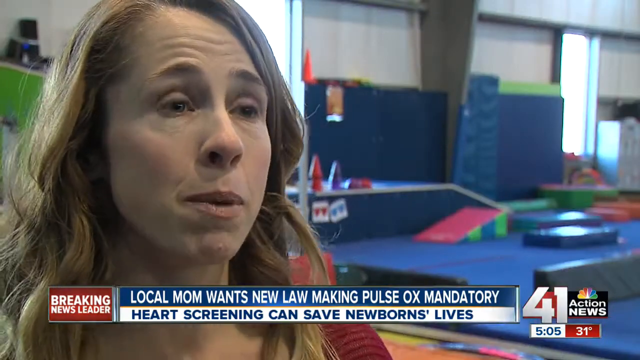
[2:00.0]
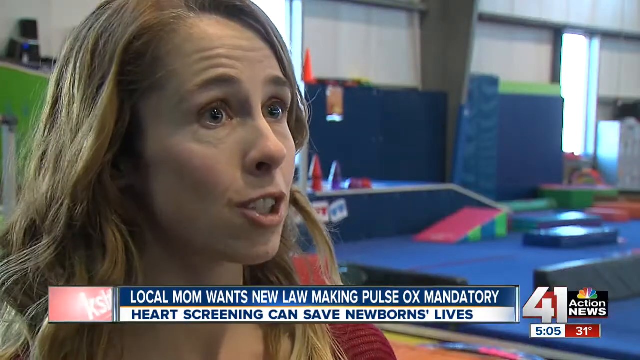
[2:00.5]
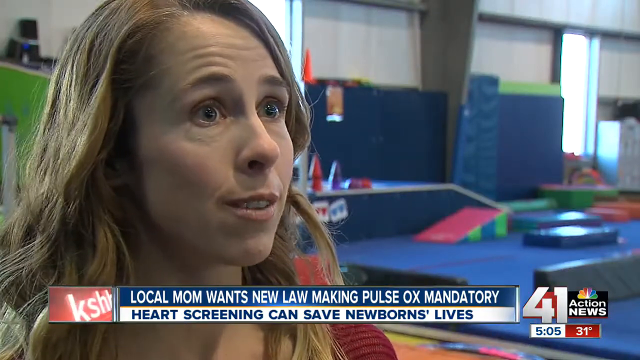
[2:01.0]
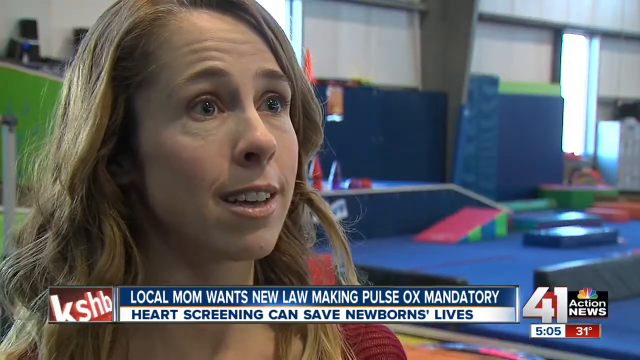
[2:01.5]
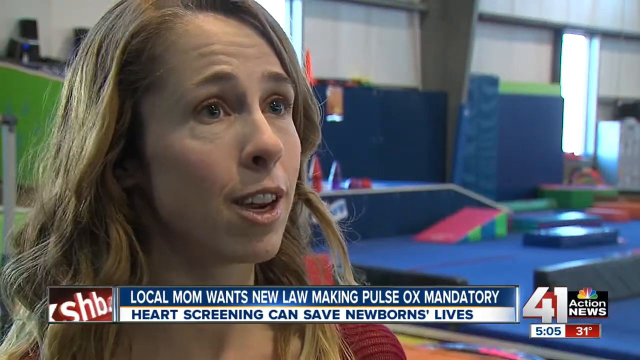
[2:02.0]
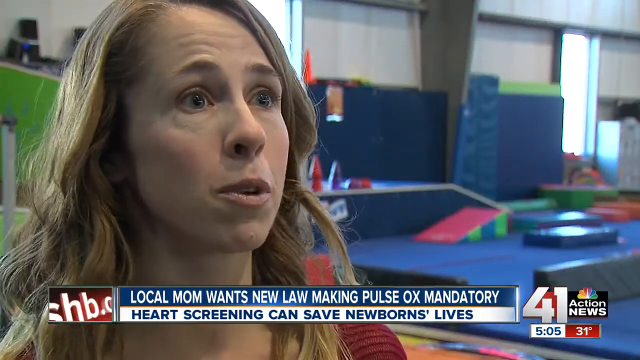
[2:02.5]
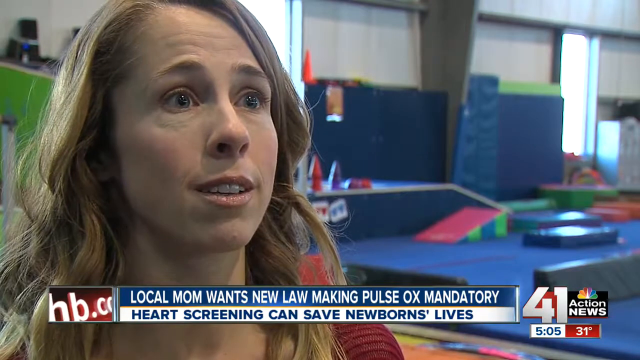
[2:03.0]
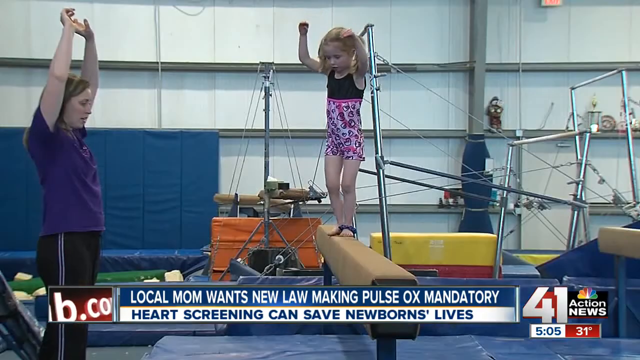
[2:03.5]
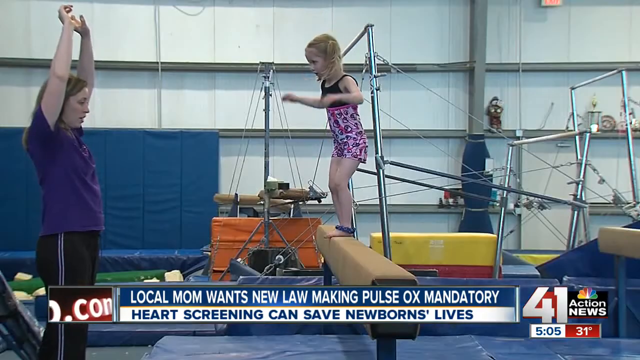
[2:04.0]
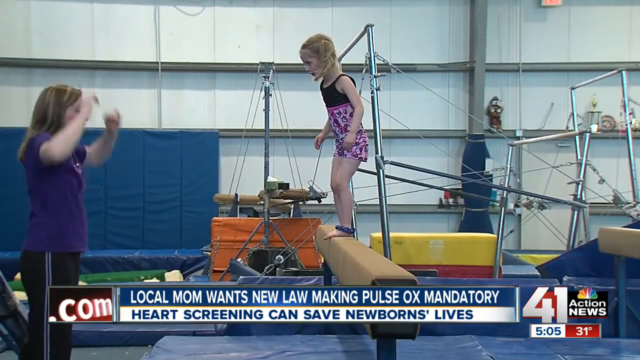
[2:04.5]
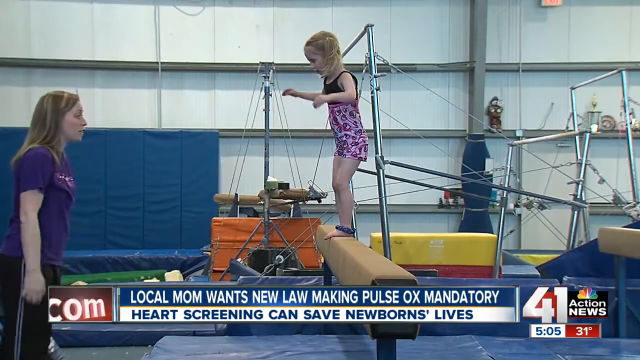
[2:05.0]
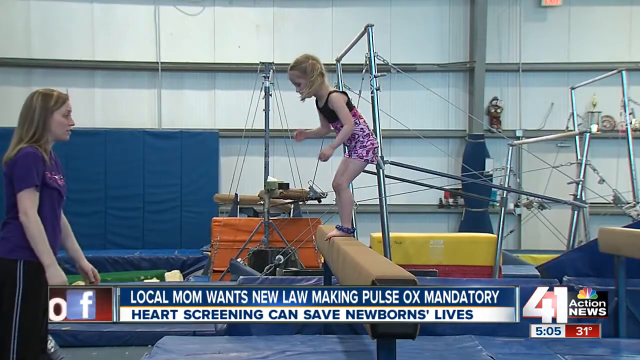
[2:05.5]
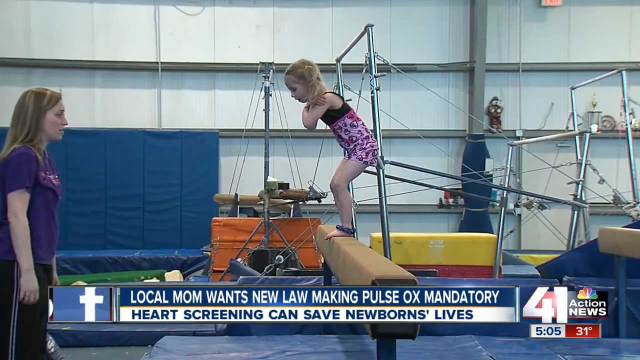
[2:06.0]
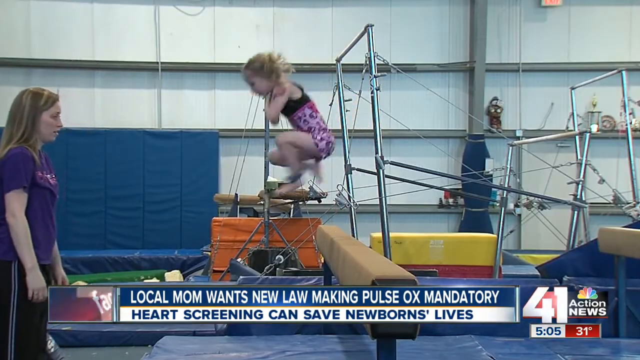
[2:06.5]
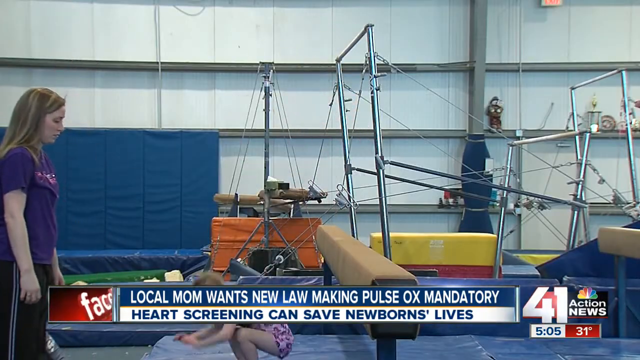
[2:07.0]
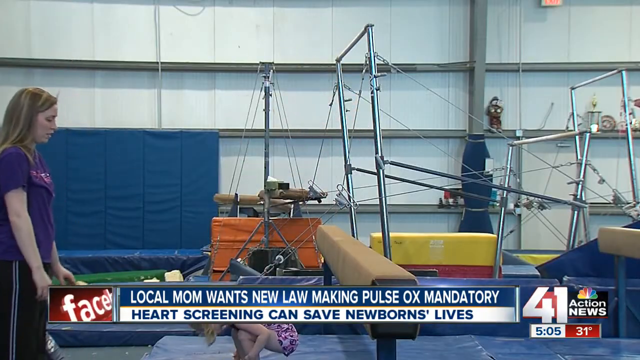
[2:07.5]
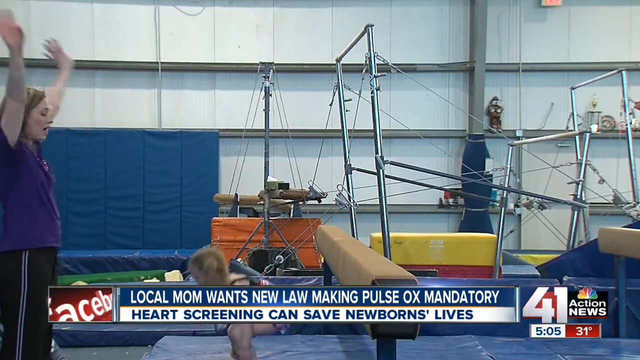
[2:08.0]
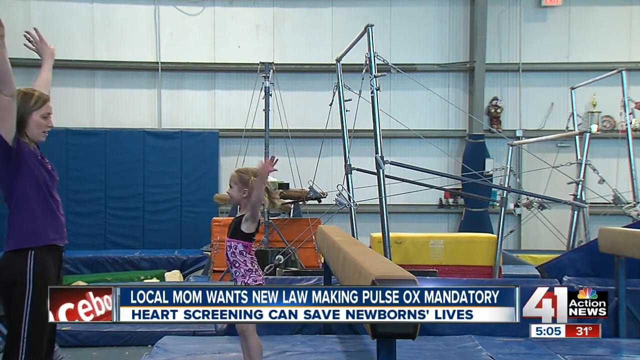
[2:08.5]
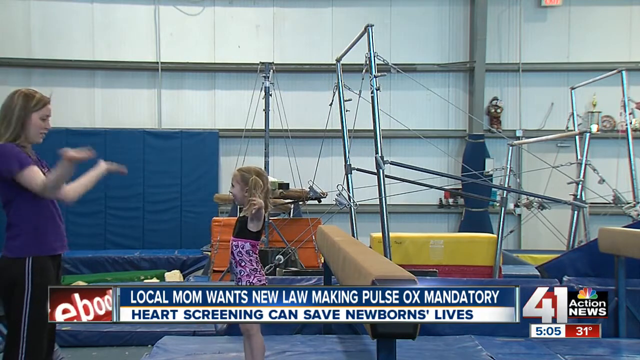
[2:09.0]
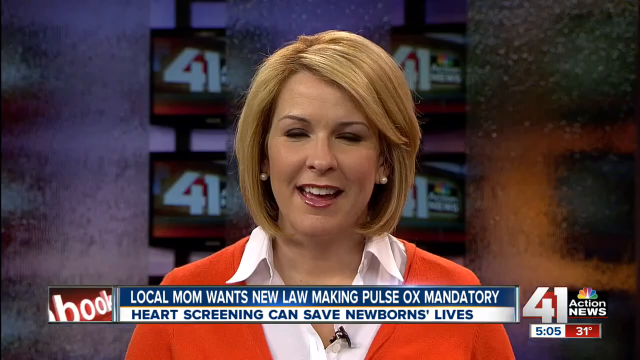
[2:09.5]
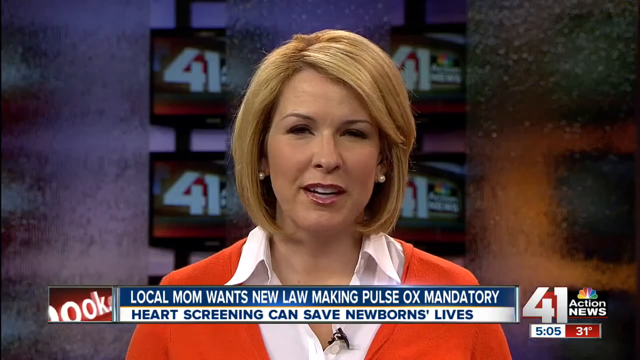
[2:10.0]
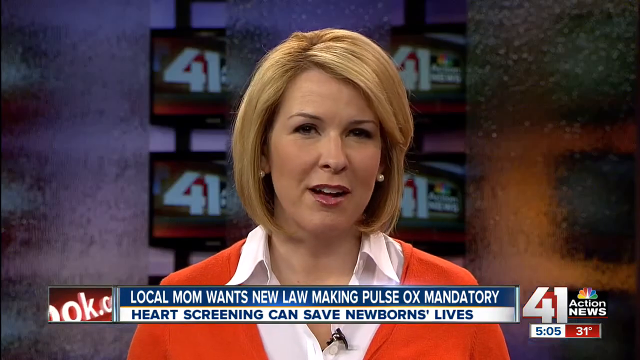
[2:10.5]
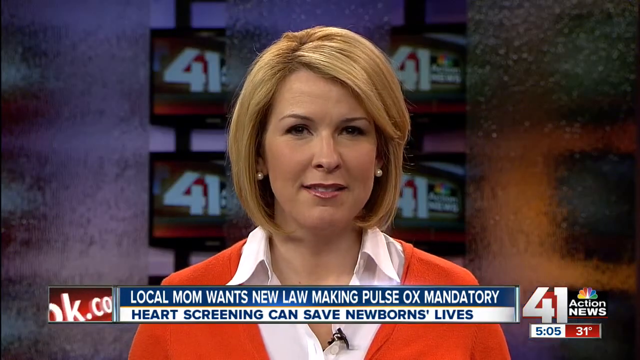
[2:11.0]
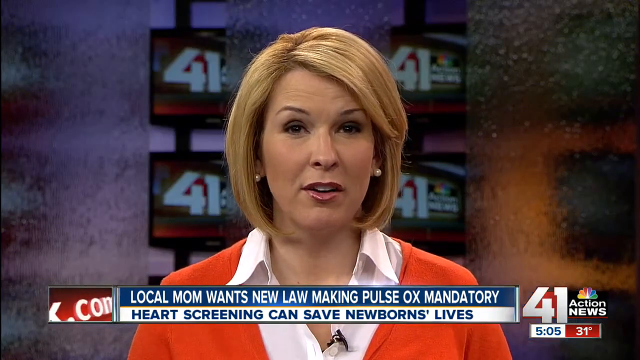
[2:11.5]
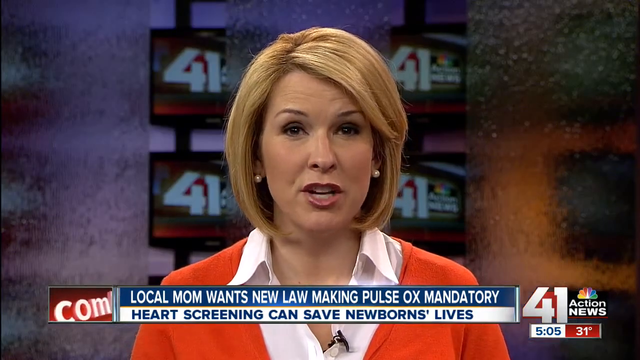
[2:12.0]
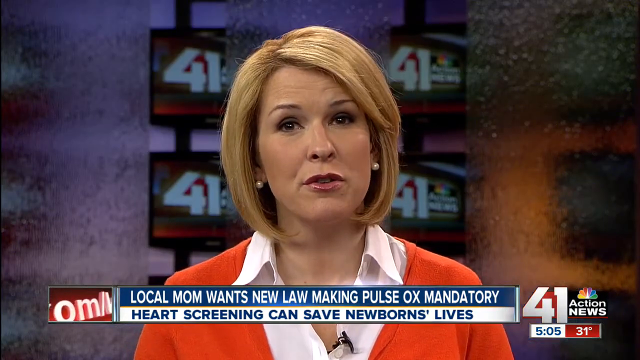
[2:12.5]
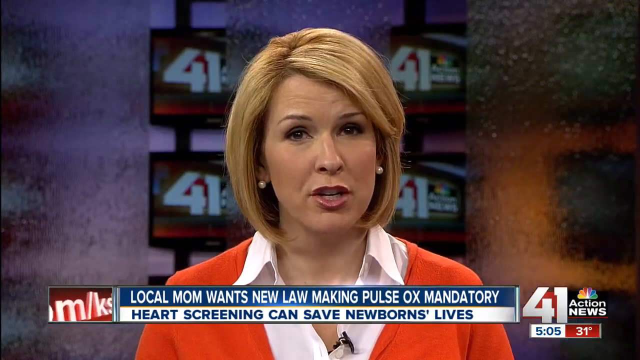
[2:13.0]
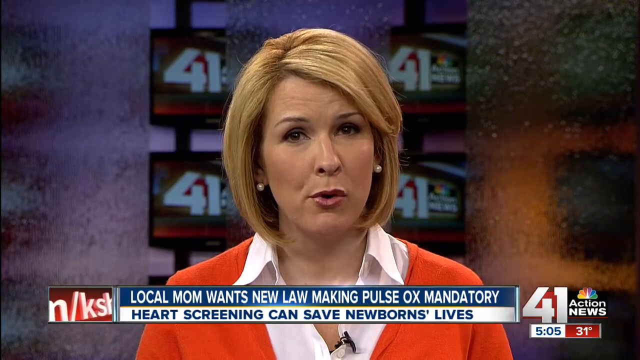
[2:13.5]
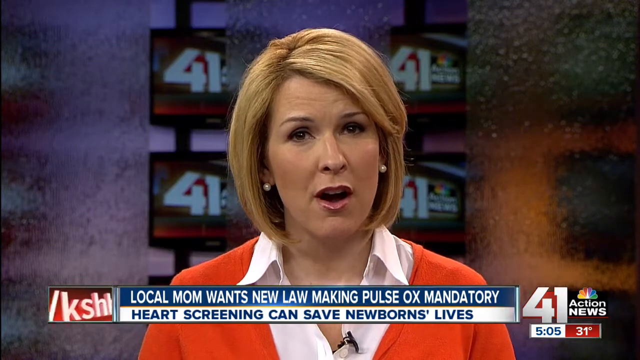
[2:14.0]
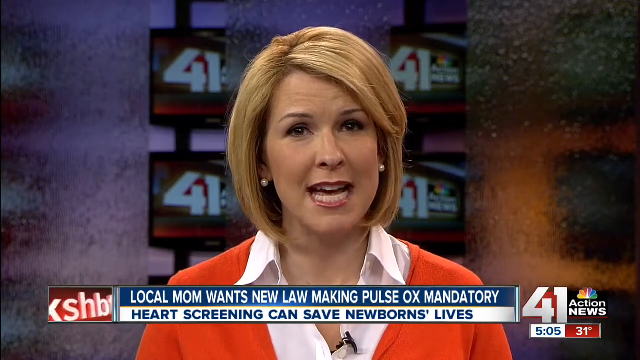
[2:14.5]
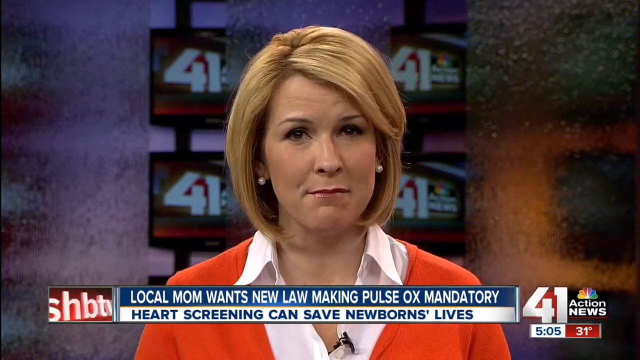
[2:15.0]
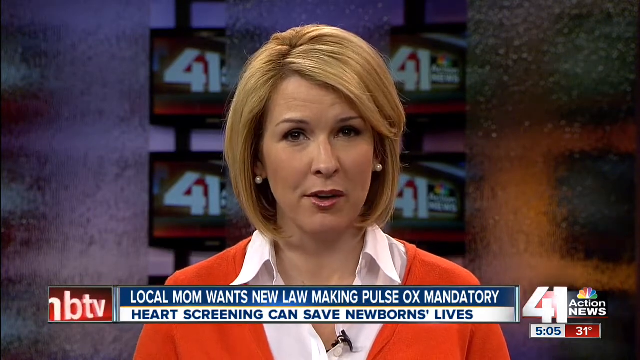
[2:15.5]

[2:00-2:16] The woman in the red jersey with blonde hair talks while facing the camera. The adult woman with the young girl shows her which type of reflex to use. The video then returns to a zoomed-in view of the female reporter in the orange jersey and white shirt, with a blonde bob and pearl rings, talking. Behind her is a background of four screens reading "41 Action News".